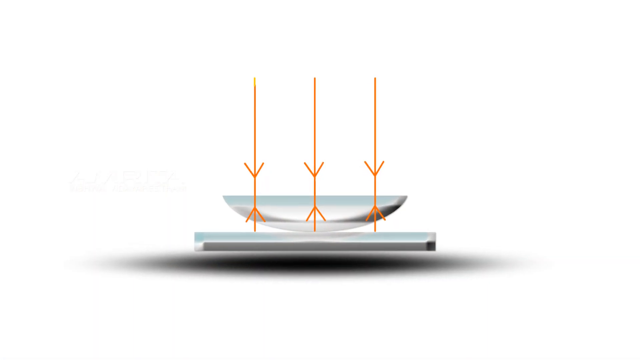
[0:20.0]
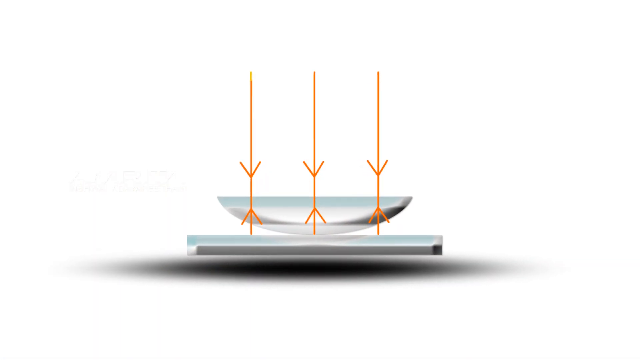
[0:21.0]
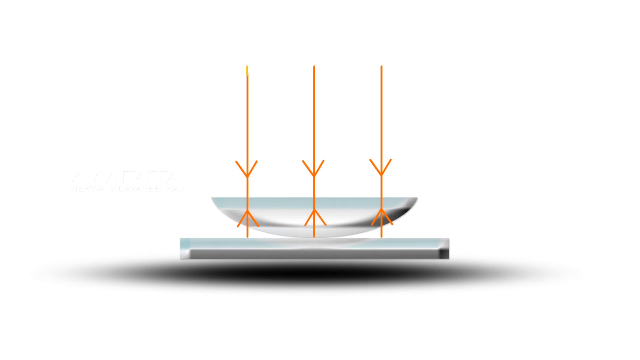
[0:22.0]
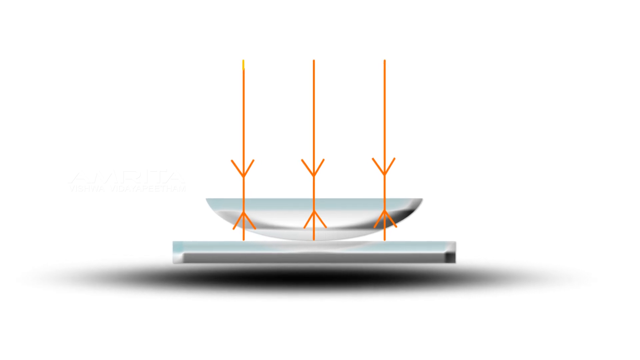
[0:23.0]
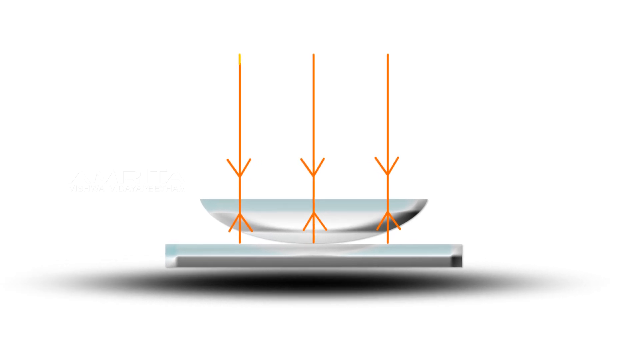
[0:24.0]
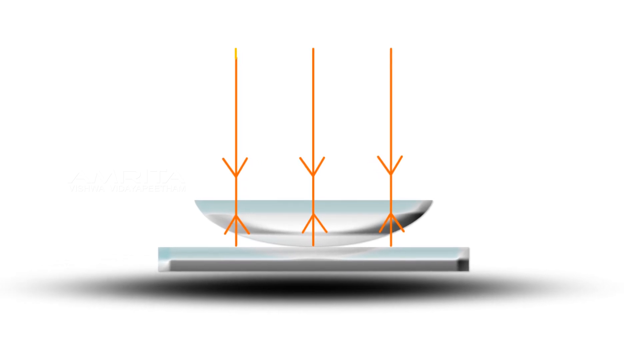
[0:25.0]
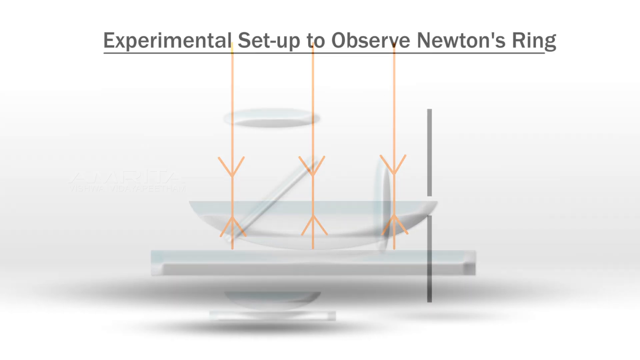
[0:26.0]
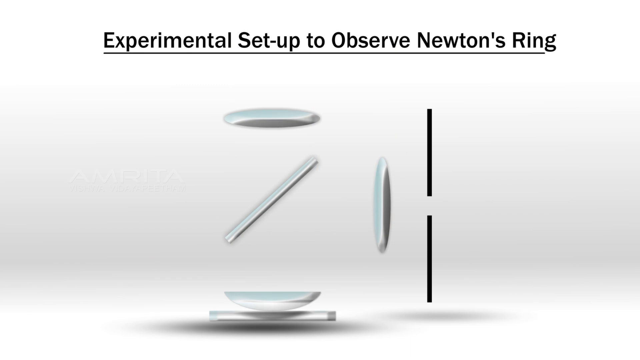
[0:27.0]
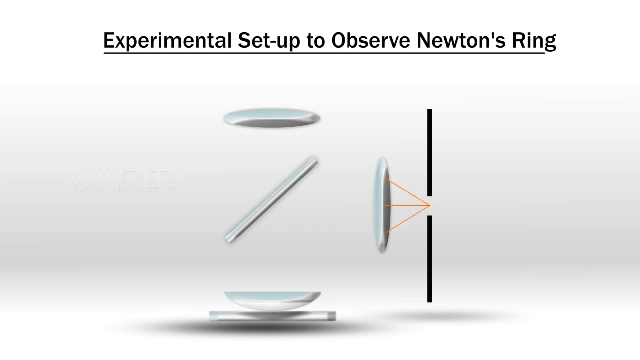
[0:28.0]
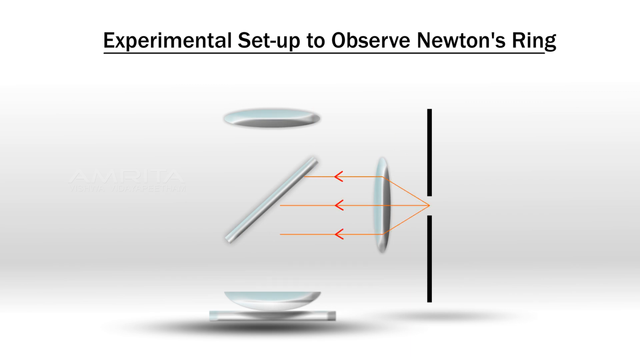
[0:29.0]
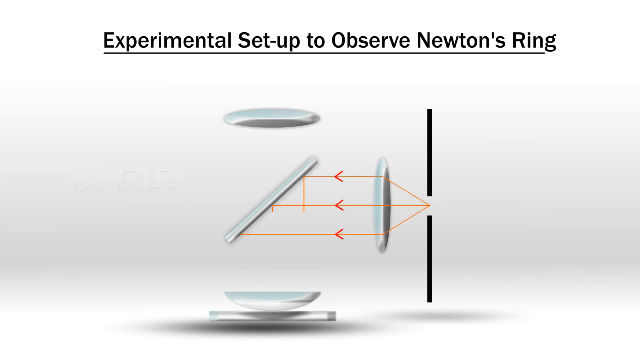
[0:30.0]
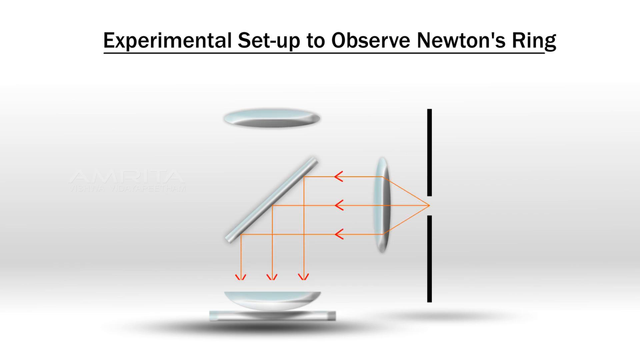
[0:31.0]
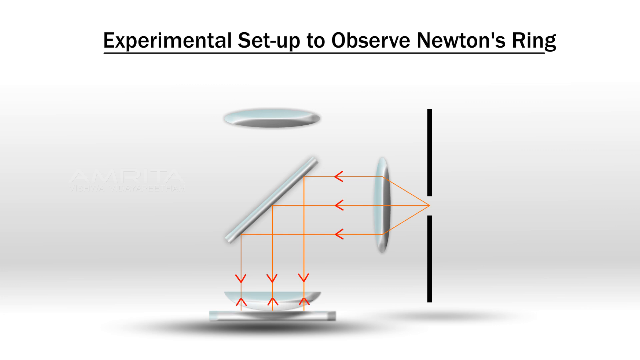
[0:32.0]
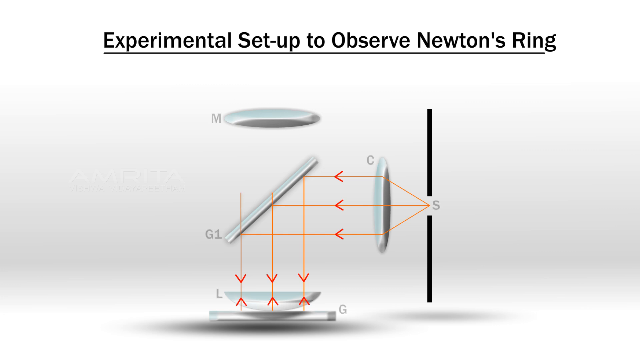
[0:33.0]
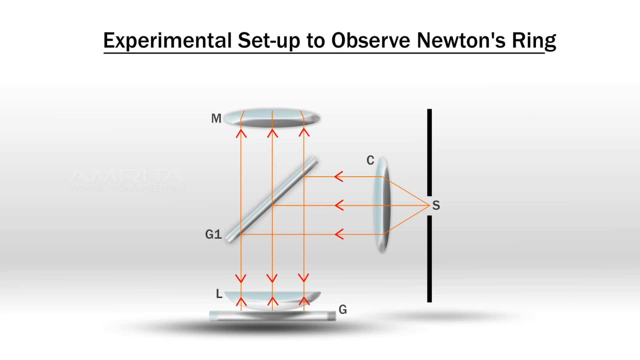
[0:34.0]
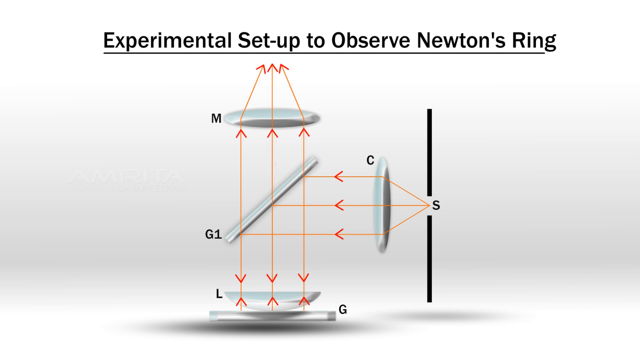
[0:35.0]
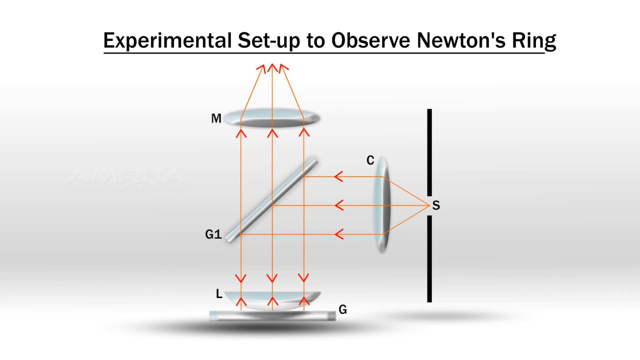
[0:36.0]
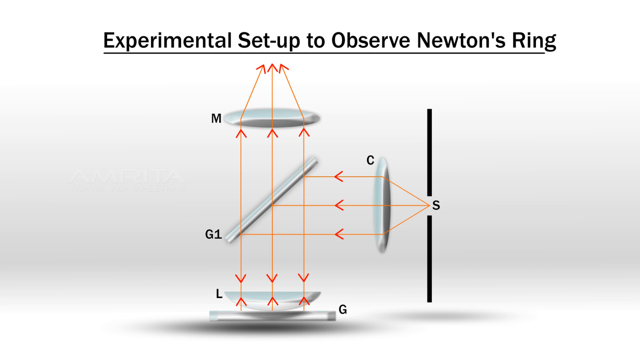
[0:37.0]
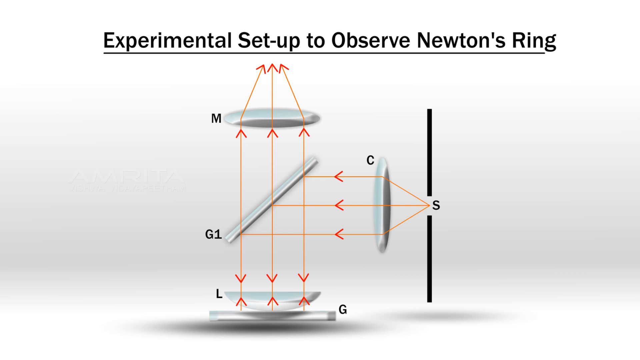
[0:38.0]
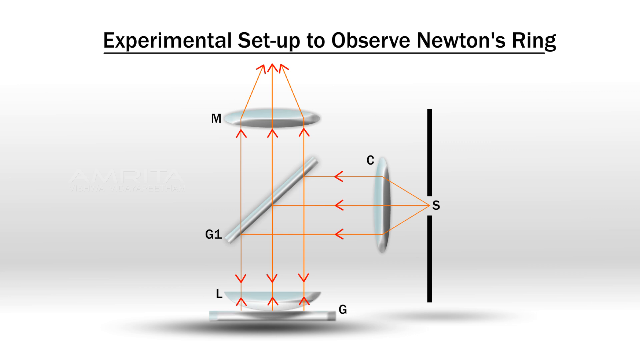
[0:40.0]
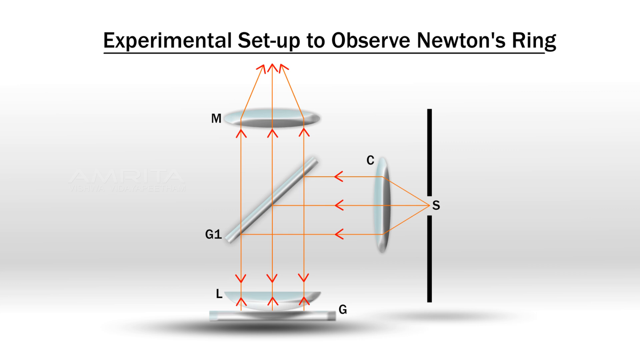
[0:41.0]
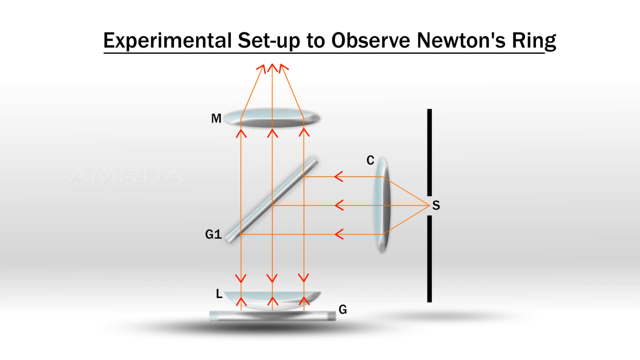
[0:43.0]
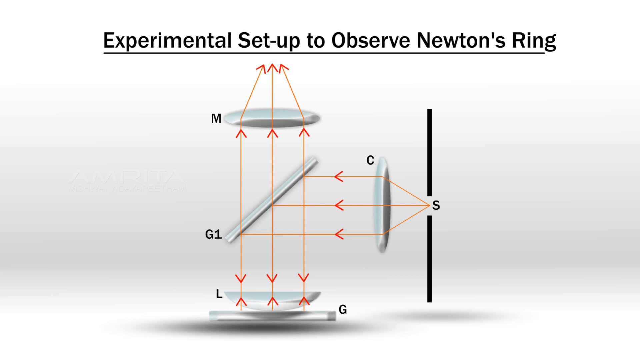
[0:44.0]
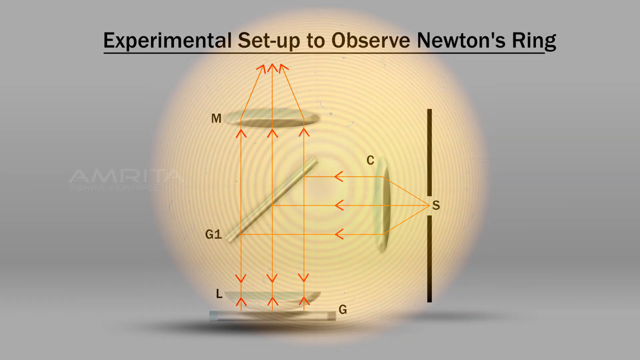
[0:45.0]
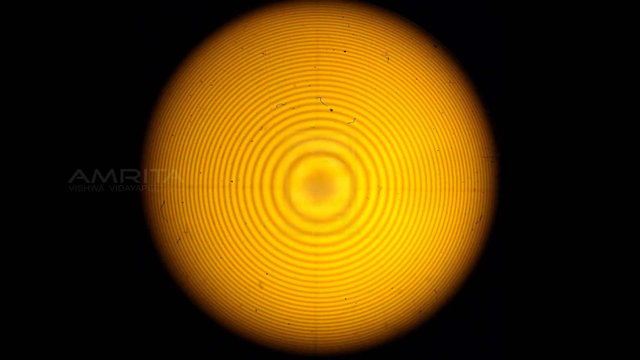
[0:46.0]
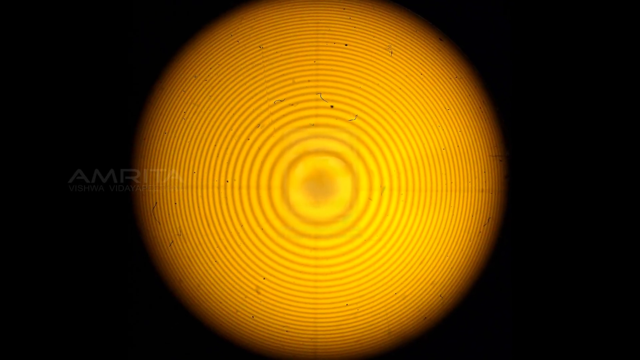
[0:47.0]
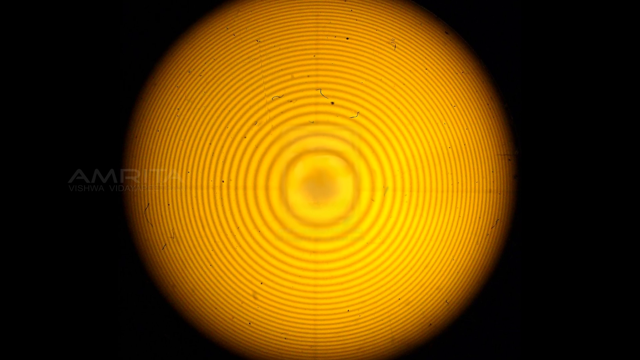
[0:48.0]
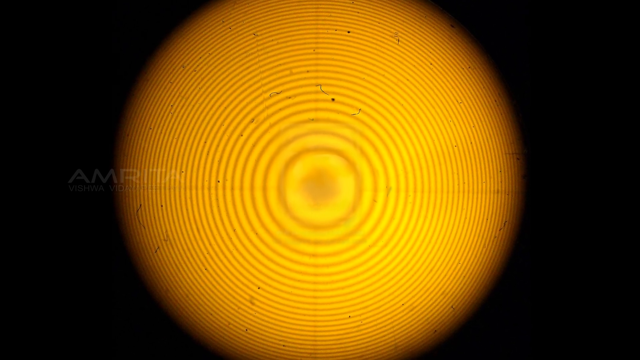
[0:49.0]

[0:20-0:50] On a white backdrop, a computer-generated still image shows what looks like a silver half-moon shape resting on top of a silver rectangular shape, with three arrows pointing up and down from it. The camera pans in on it, moving gradually closer. The scene then changes to words reading "experimental setup to observe Newton's ring" in black font, with a horizontal line underneath. Below are a series of separate silver pieces: a somewhat spaceship-like silver oval right below the words, a silver rod set roughly diagonally beneath that, another silver piece below it, and so on. The image is animated: as the seconds pass, horizontal red arrows appear on the right side, coming out of one of the silver pieces.